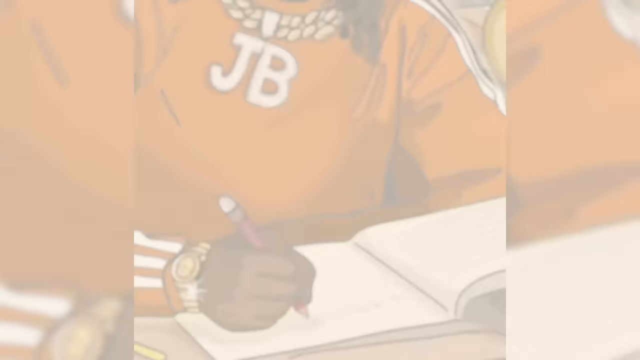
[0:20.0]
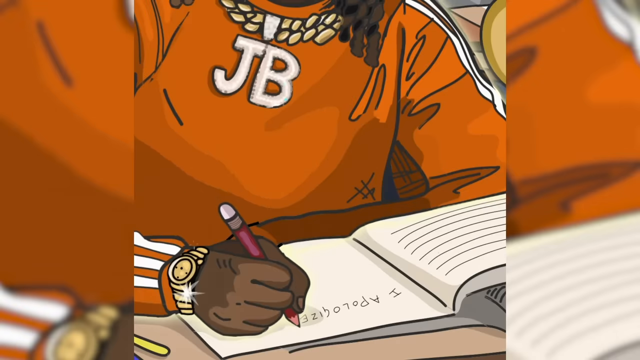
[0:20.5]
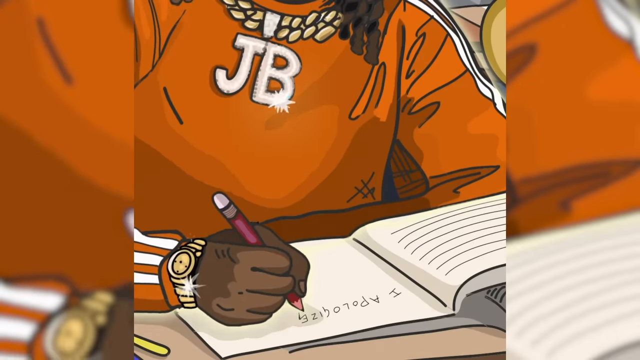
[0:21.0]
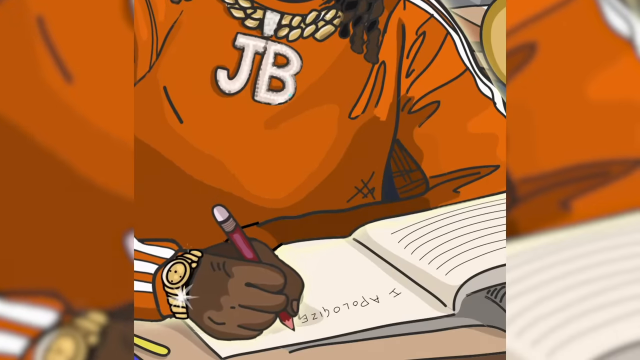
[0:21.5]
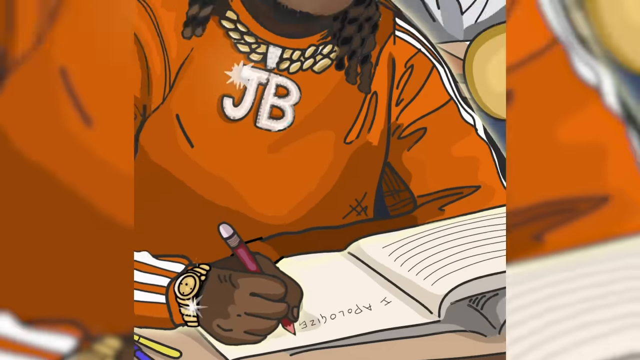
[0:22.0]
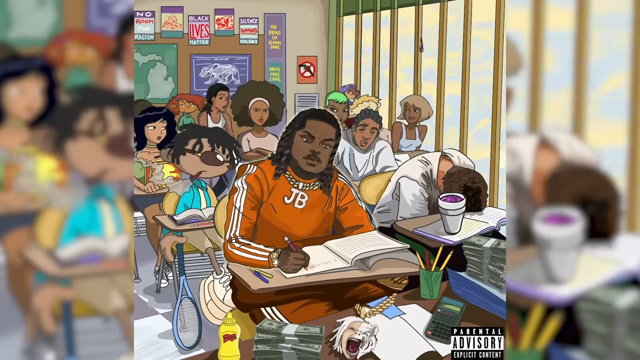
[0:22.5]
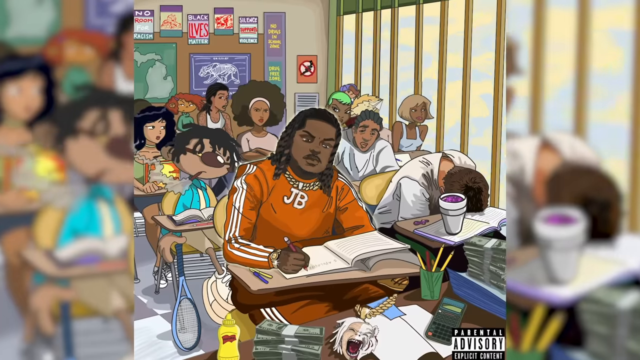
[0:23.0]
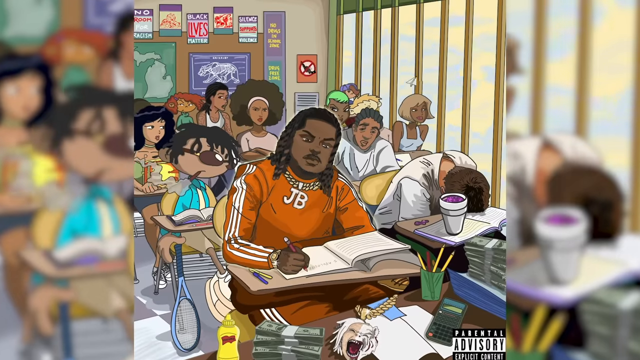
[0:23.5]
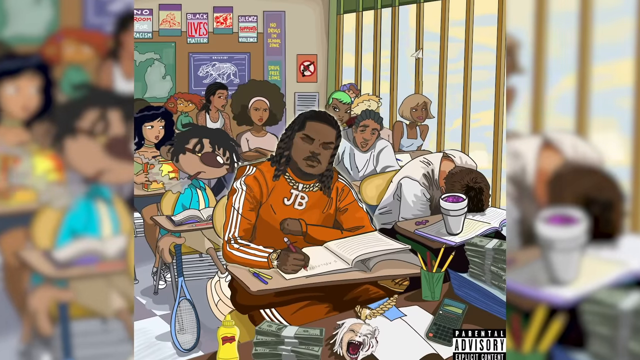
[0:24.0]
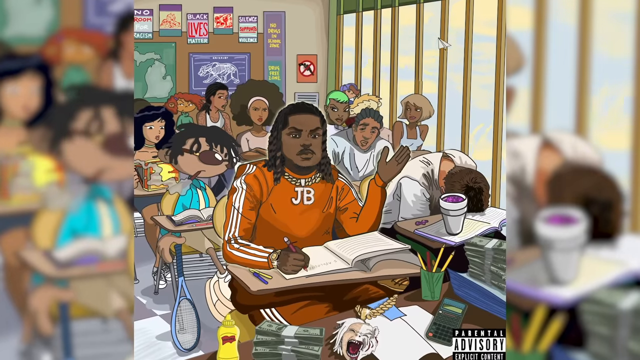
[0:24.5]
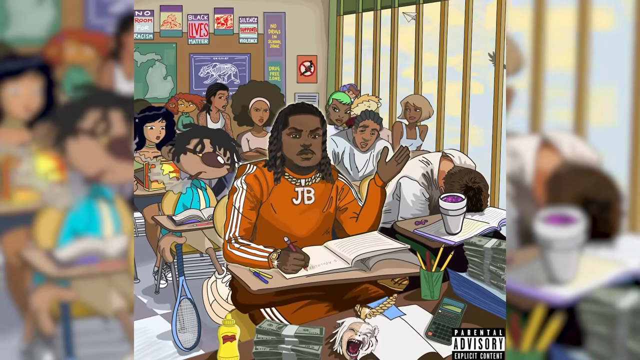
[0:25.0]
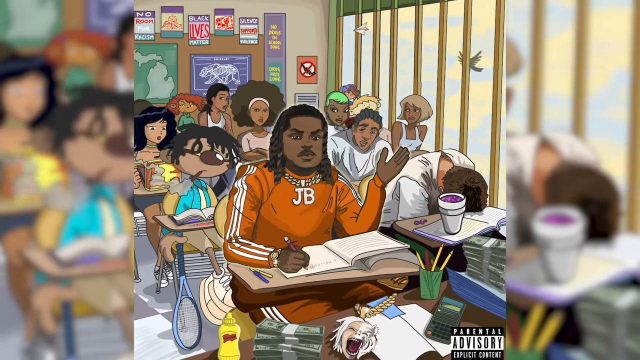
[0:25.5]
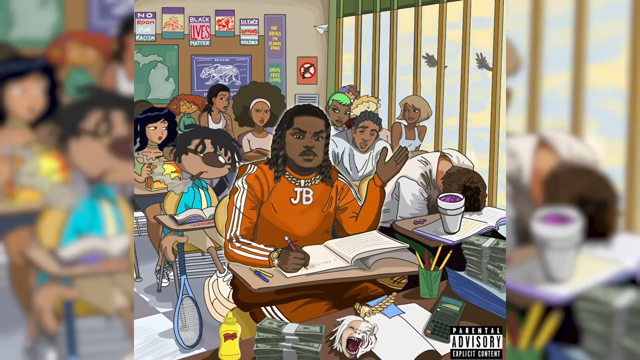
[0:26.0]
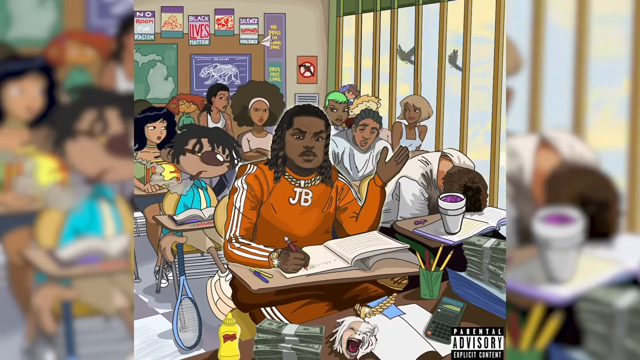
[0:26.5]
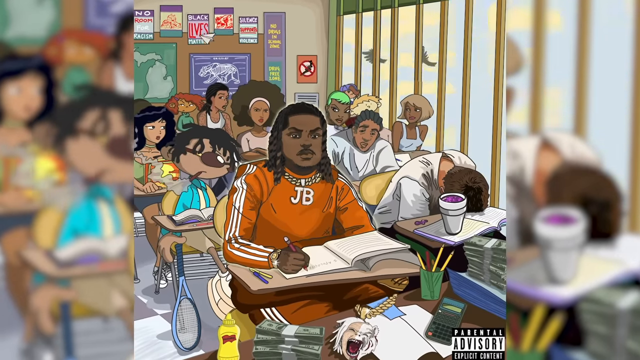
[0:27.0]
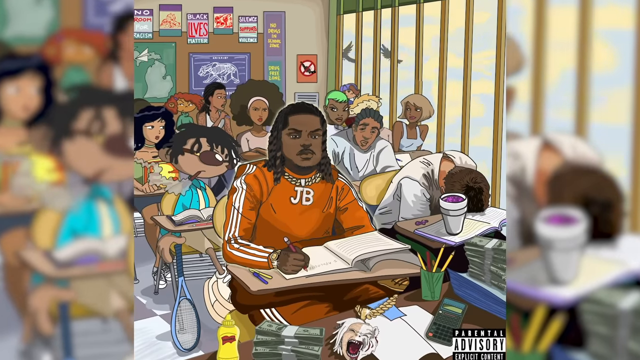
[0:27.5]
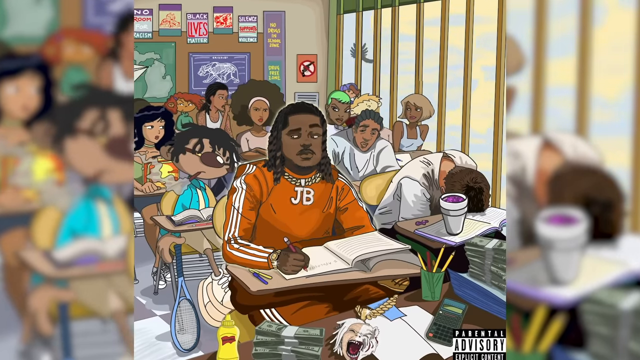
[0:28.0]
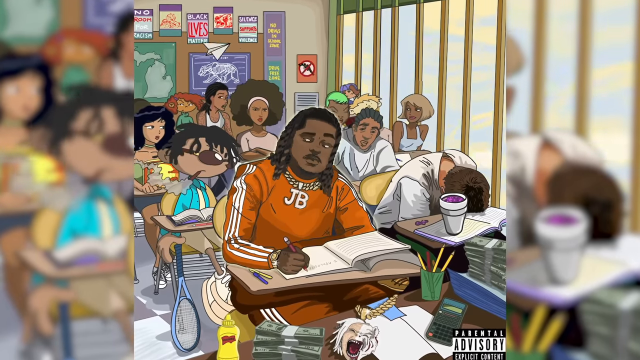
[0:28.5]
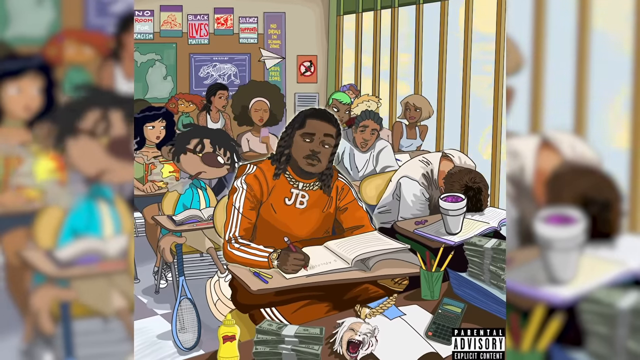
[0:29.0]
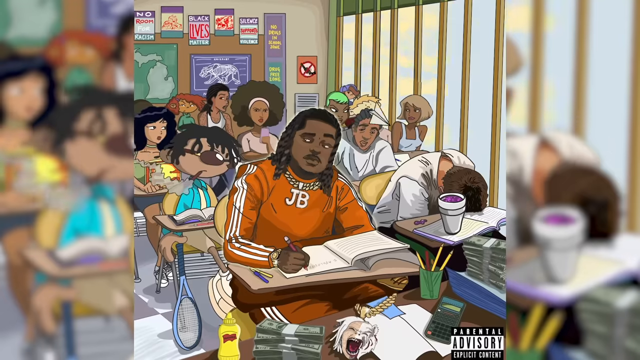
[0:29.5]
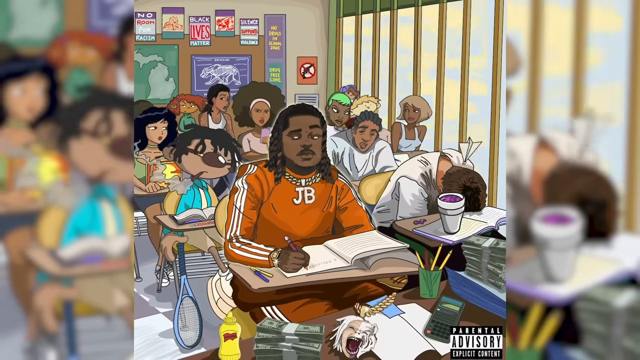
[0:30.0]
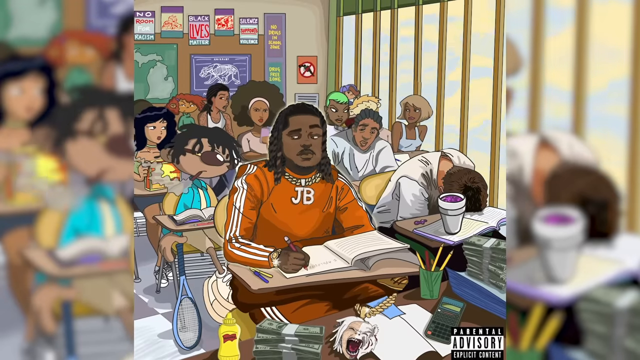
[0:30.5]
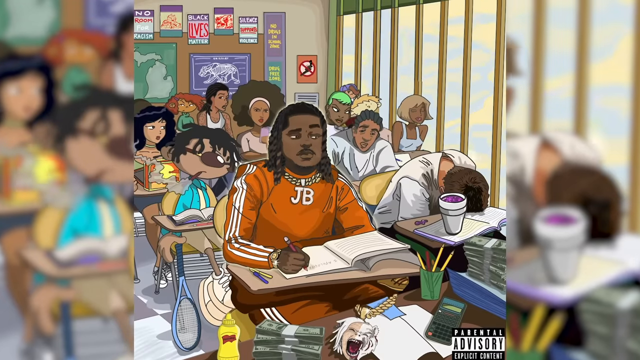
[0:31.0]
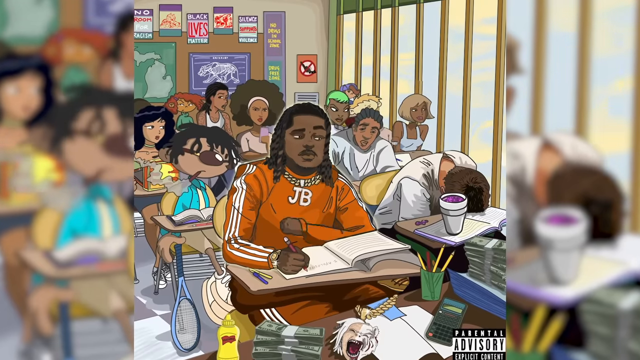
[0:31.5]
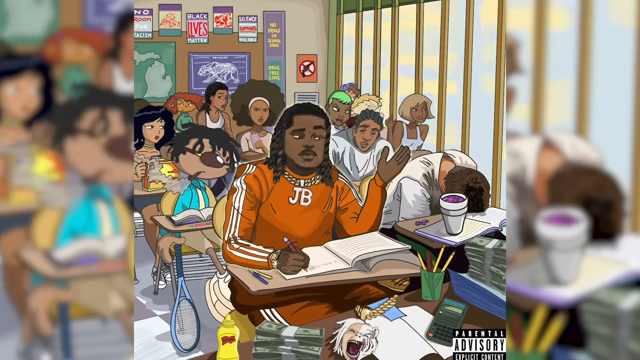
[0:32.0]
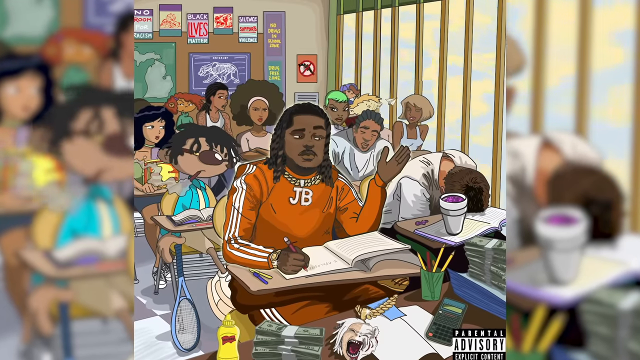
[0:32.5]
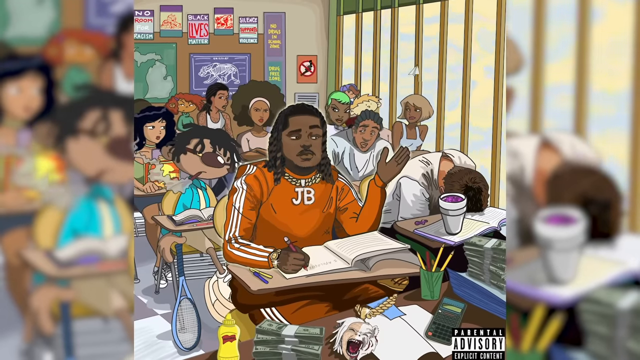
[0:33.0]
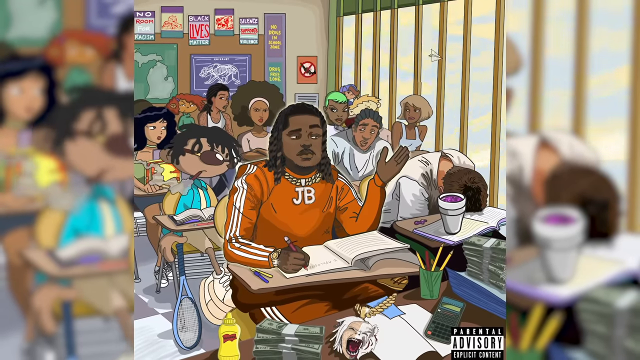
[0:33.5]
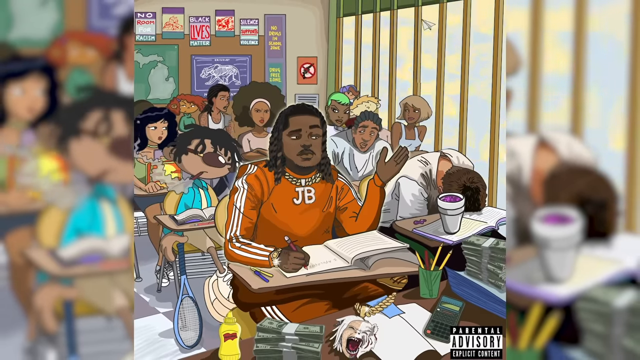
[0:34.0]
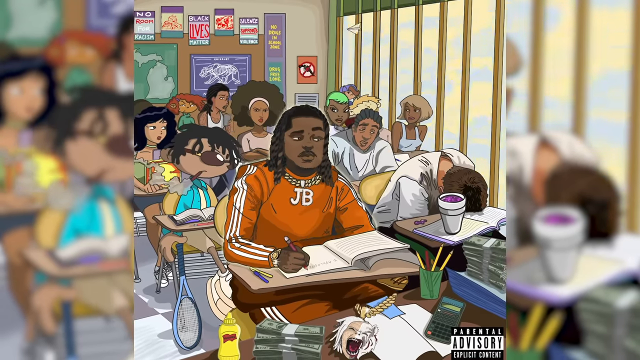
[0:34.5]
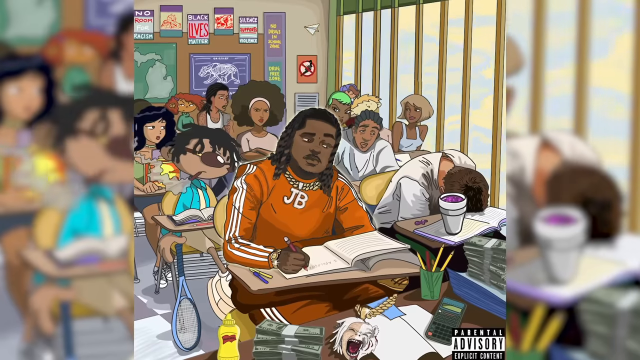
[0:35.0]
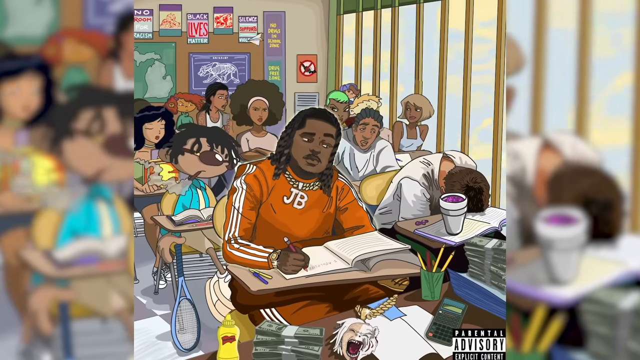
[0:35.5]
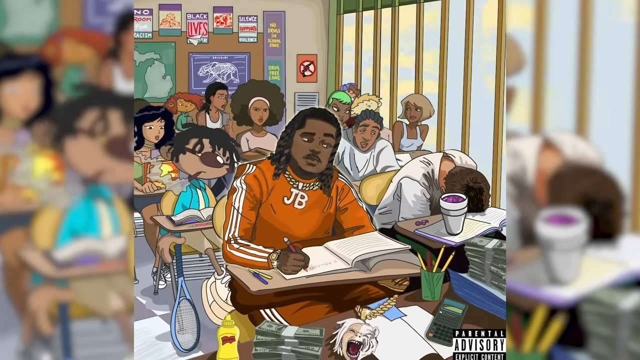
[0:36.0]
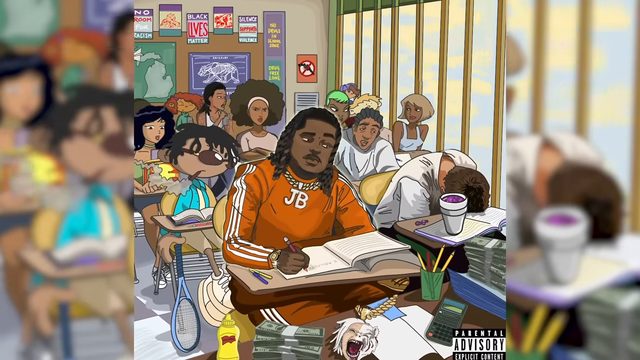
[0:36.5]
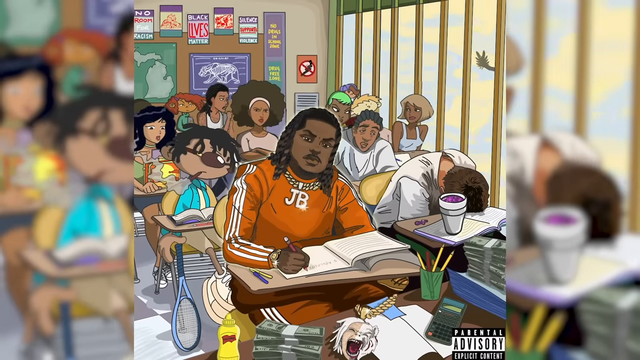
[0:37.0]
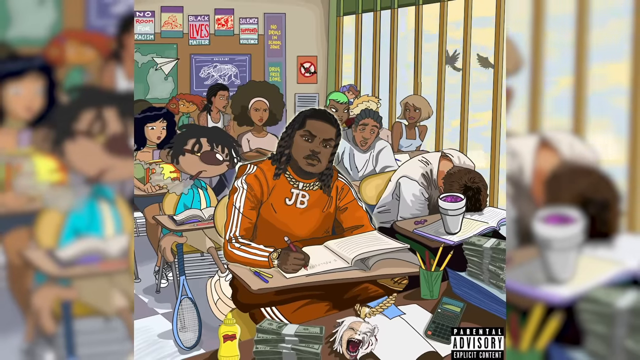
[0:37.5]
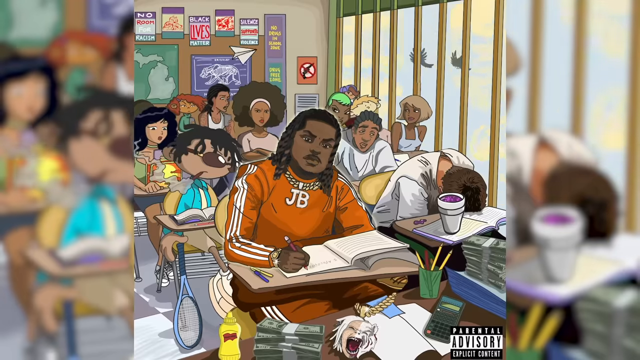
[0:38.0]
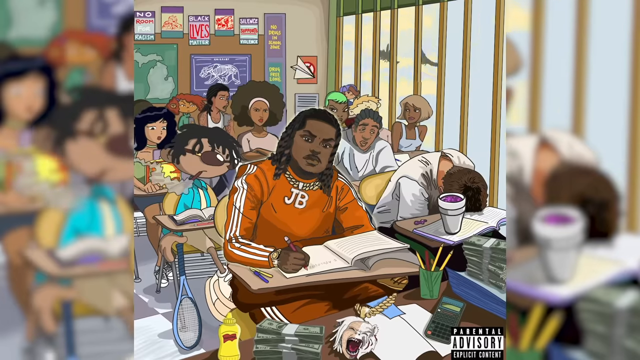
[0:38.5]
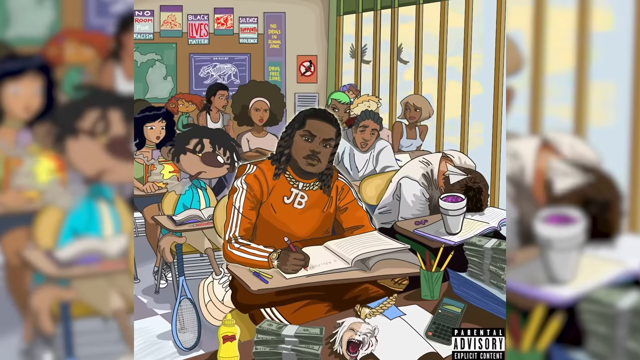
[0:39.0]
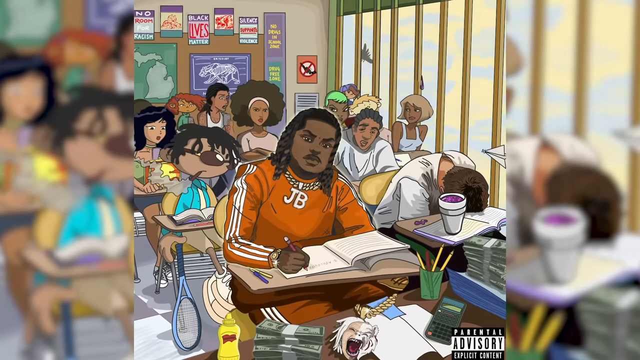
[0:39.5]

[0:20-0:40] JB, the same cartoon character, is writing in a book that appears to be a journal; he seems to be writing "I APOLOGIZE" in capital letters. He sits with his hand raised a little in the air while paper airplanes keep flying around the room. The other kids are mostly just sitting, some nodding their heads a little. One looks like he is on the verge of falling asleep, while the guy next to him is knocked out. Toward the back sits a girl with short green hair, possibly nodding. A bulletin board is in the back, along with a world map of which only a small portion is visible. A Black Lives Matter sign hangs in the back, and various posters are posted around. There is possibly an air conditioning vent on the back wall, and possibly a tennis racket behind the guys.